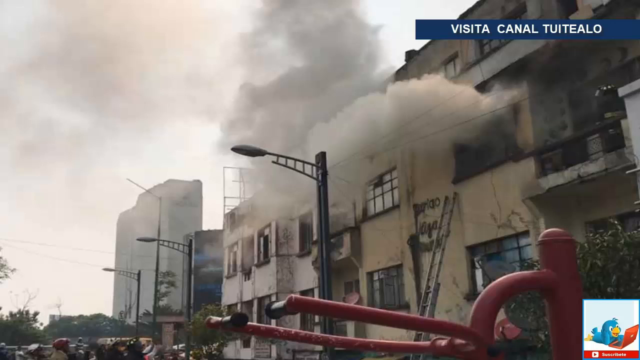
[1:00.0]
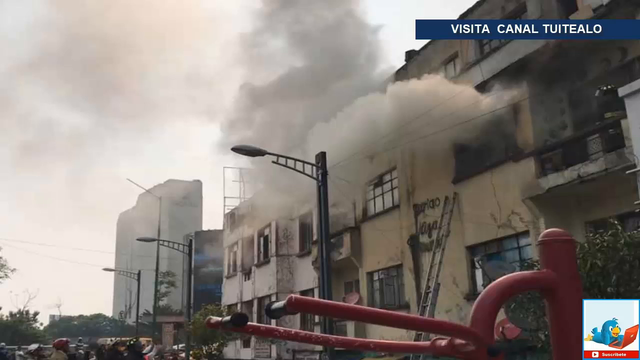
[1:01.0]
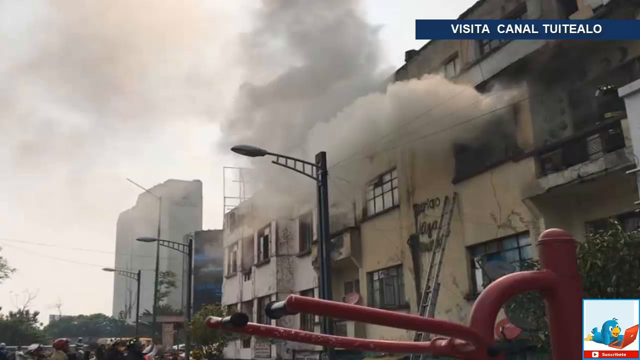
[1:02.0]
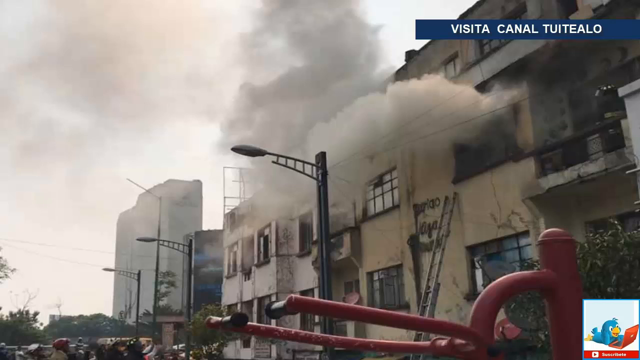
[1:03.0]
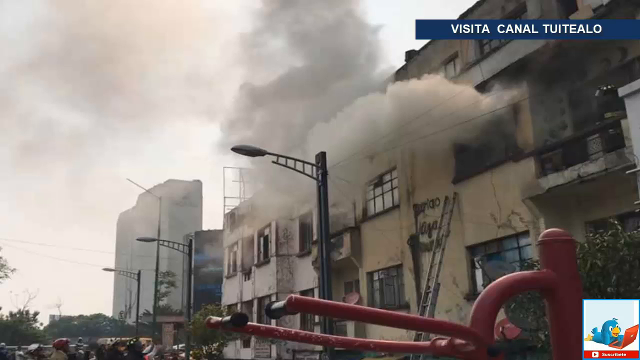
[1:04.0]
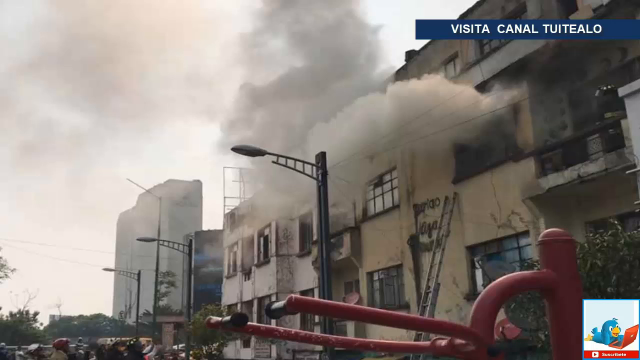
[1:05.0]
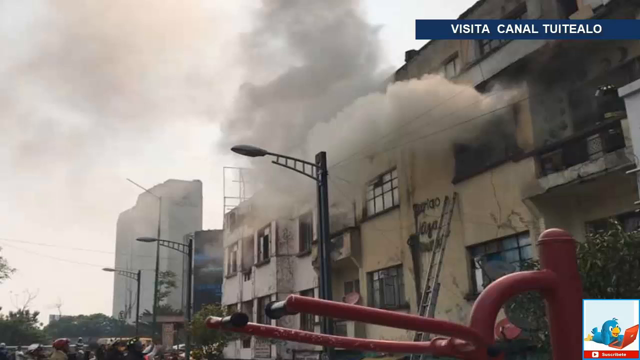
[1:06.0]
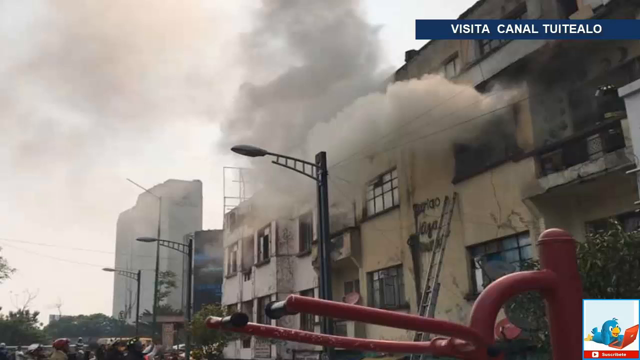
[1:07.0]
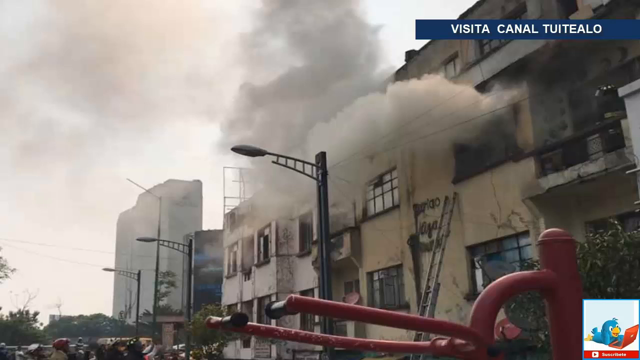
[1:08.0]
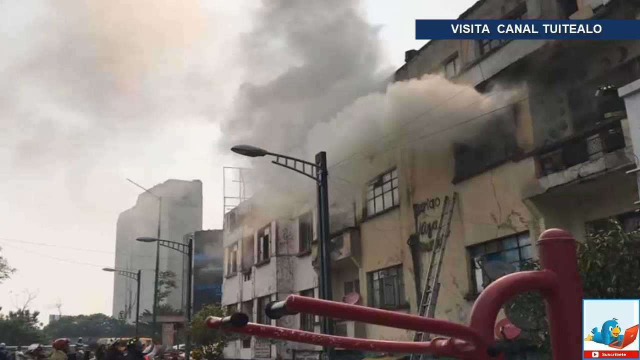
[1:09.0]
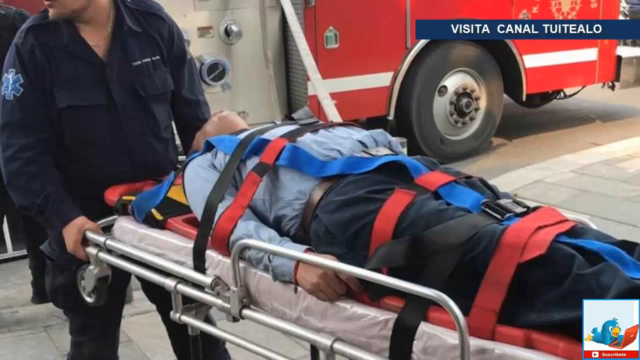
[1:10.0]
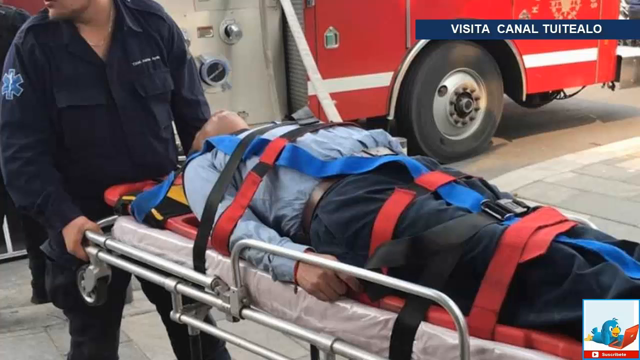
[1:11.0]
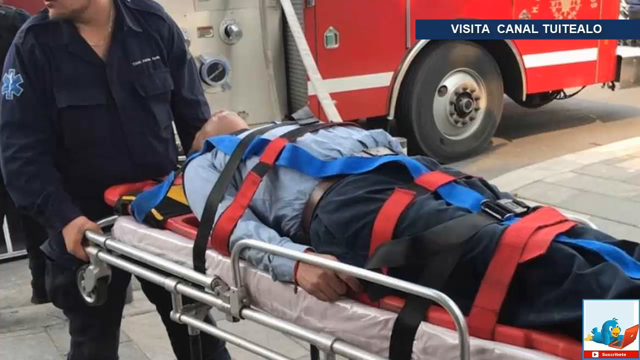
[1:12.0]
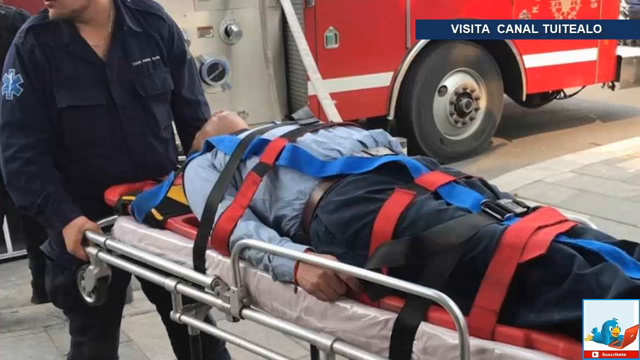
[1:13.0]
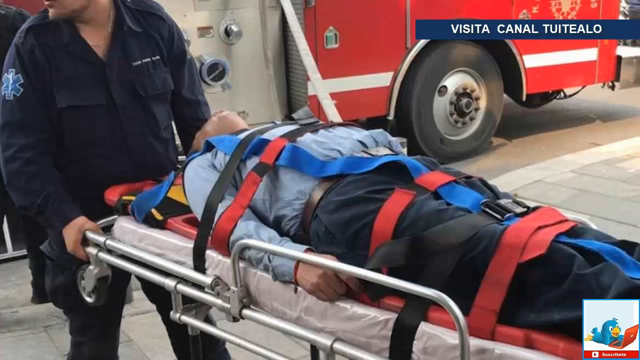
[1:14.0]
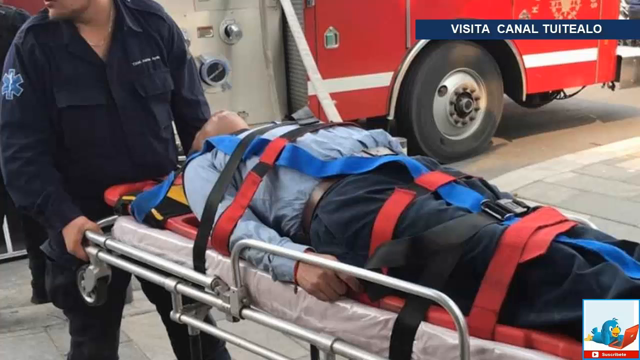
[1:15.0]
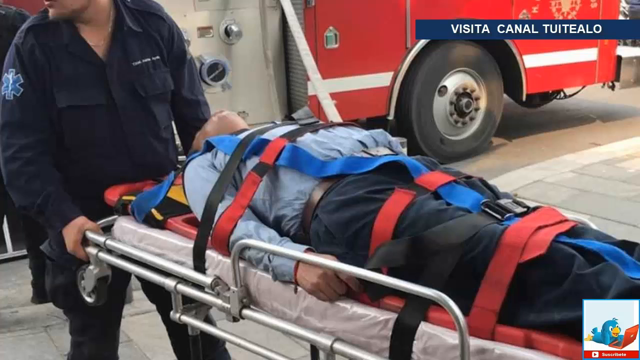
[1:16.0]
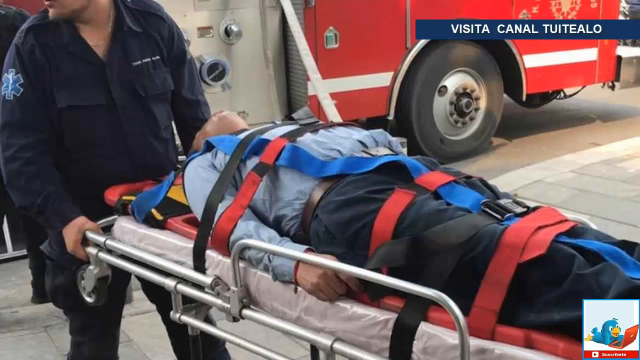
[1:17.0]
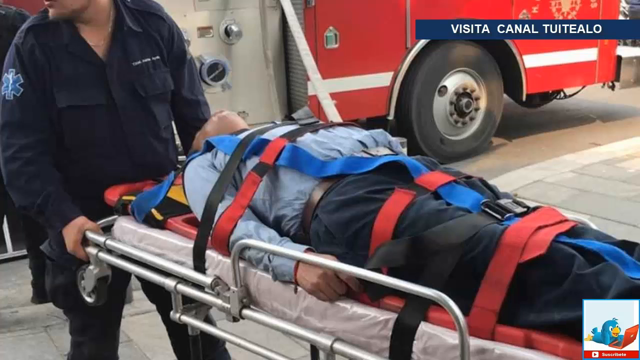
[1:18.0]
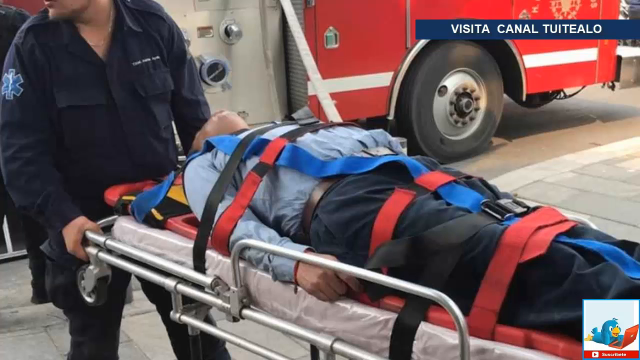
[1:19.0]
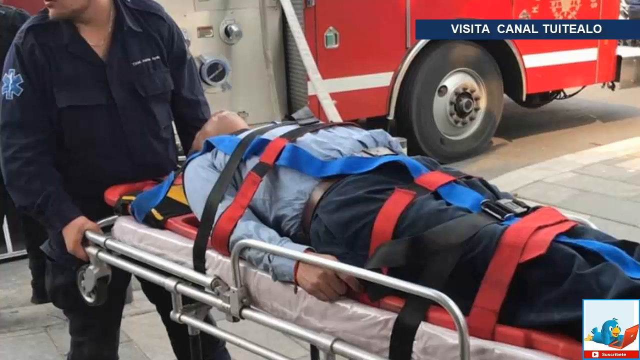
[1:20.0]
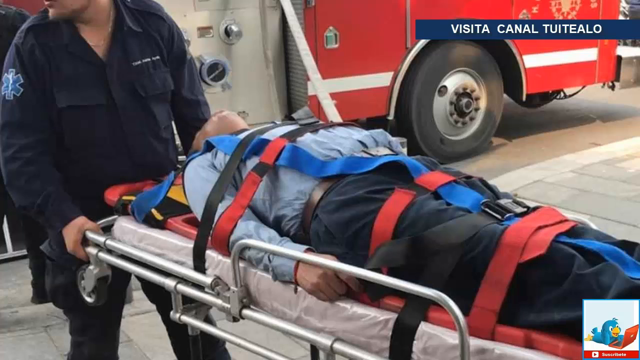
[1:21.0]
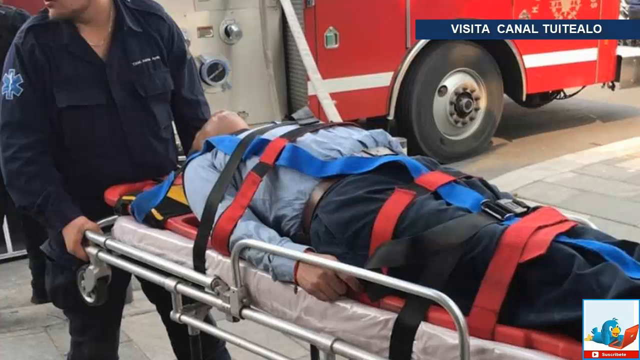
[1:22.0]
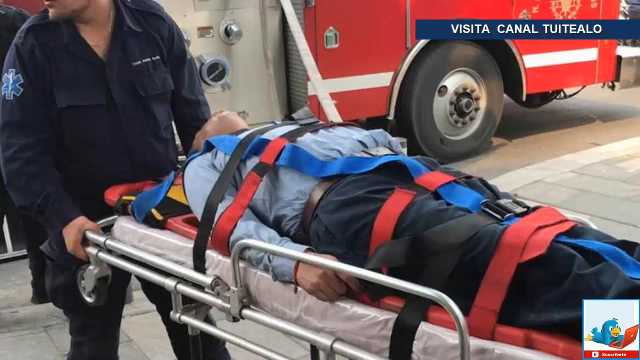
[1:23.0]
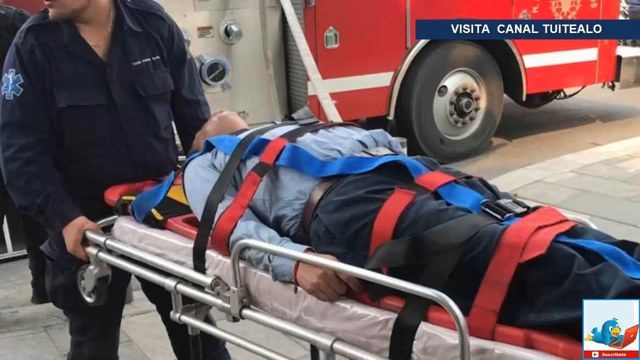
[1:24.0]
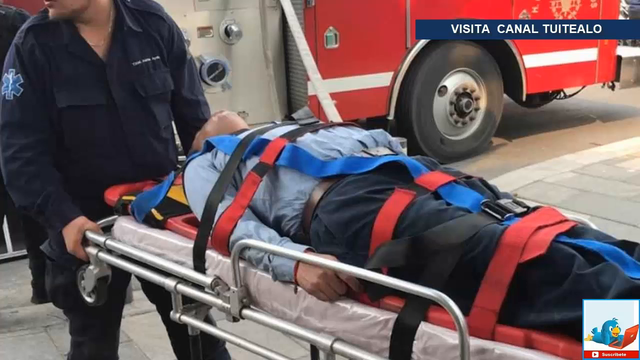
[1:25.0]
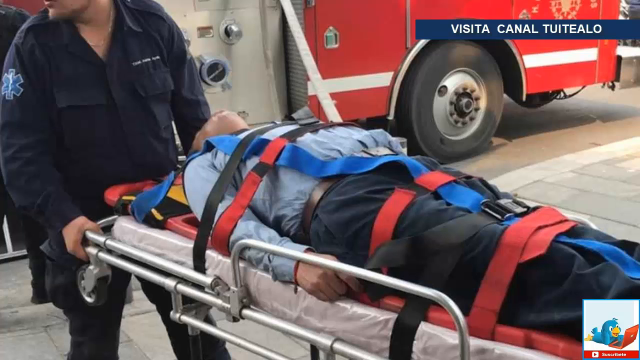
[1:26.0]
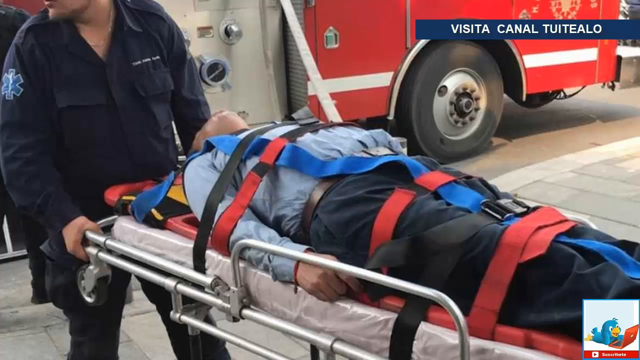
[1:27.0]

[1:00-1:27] Lots of smoke comes out of one of the windows of the burning cement block type building, creating a haze in the air. A ladder is leaned against the building, three streetlights are visible, and writing on the building appears to be in cursive. A red device is in the foreground; it might be a piece of play equipment or it could be the fire truck. Next, a person wearing blue pants and a blue shirt is strapped to a stretcher. One of the paramedics, wearing all blue, has a blue medical patch, and their name appears to be stenciled on the shirt. A red fire truck is in the background, parked on the street next to a sidewalk; its wheel, door and door handle are visible, along with nozzles on a silver part just behind and to the left of the door. A person standing off on the left in the background appears to be wearing all black and might be a police officer.